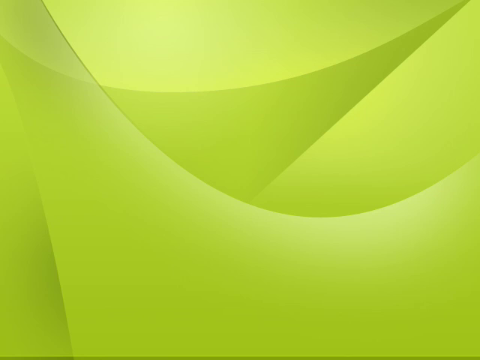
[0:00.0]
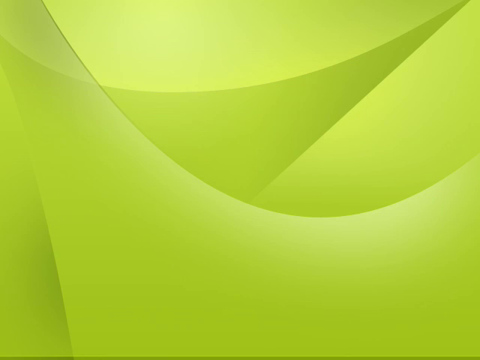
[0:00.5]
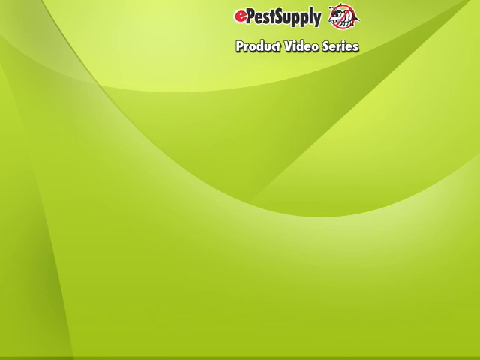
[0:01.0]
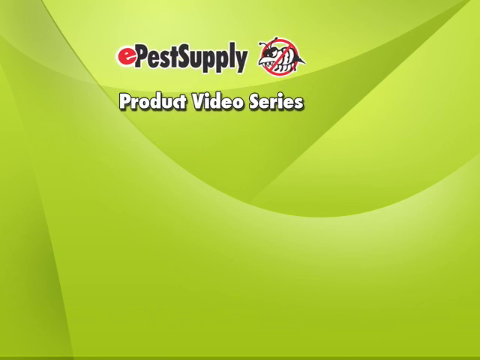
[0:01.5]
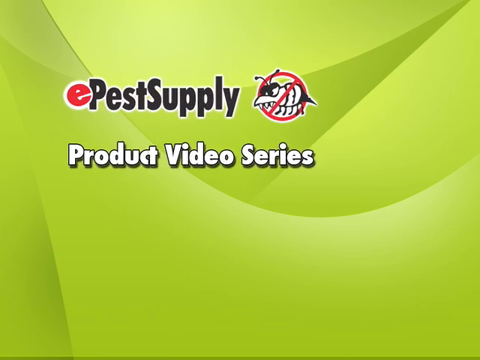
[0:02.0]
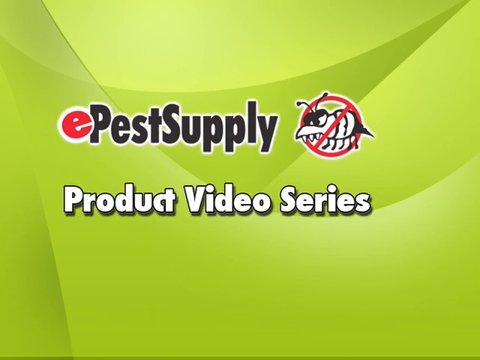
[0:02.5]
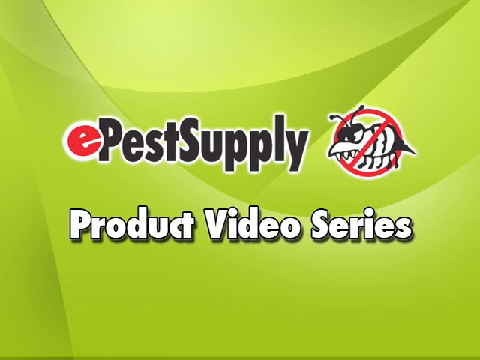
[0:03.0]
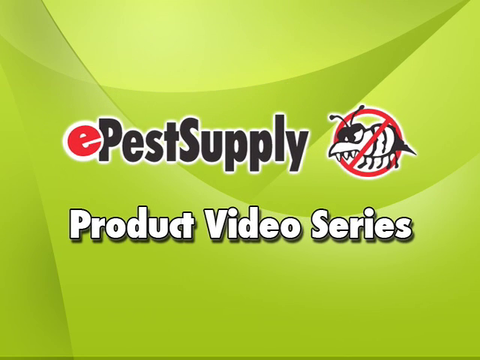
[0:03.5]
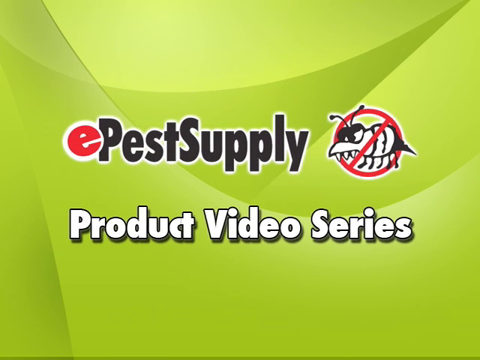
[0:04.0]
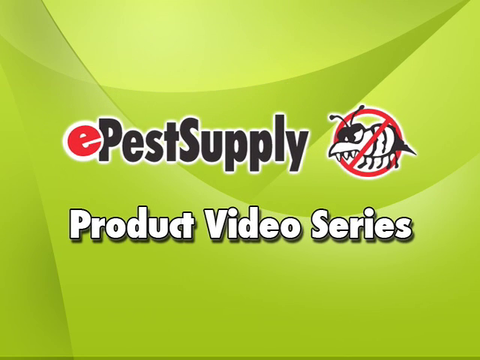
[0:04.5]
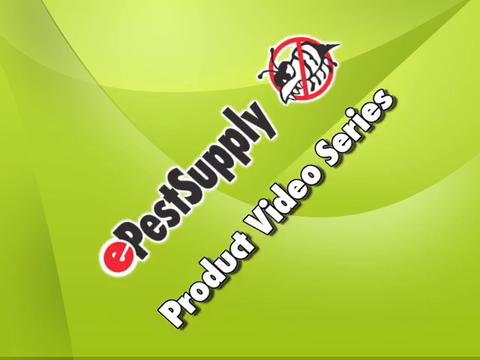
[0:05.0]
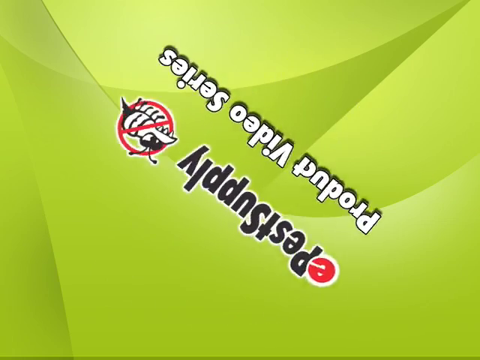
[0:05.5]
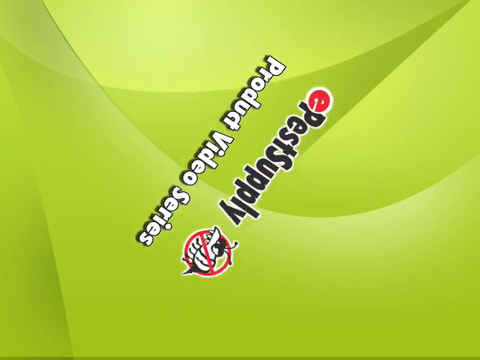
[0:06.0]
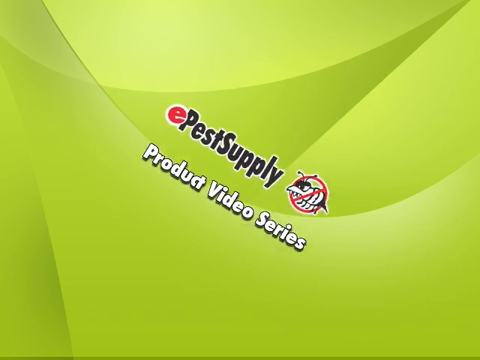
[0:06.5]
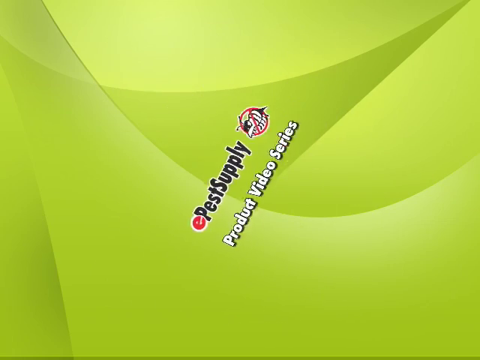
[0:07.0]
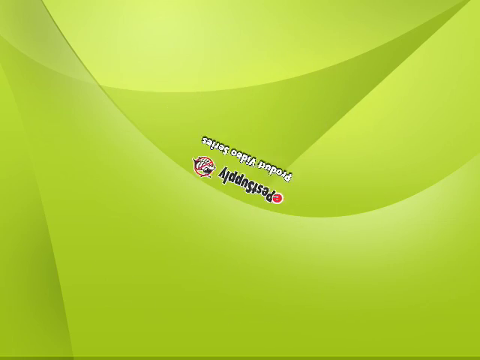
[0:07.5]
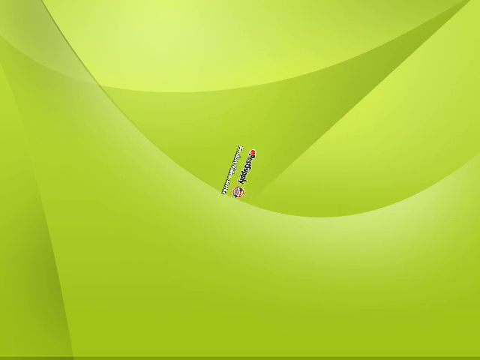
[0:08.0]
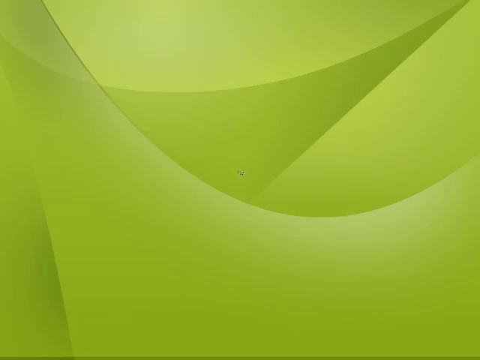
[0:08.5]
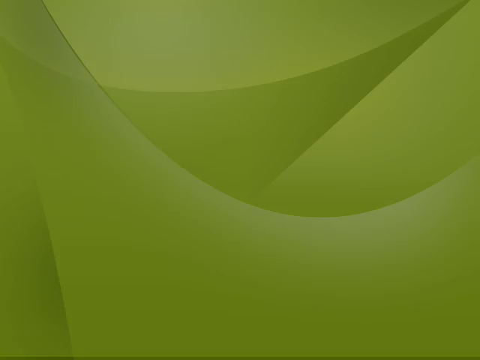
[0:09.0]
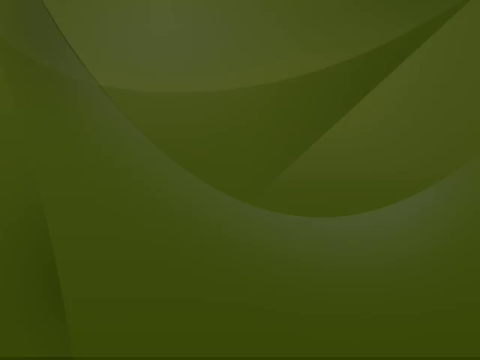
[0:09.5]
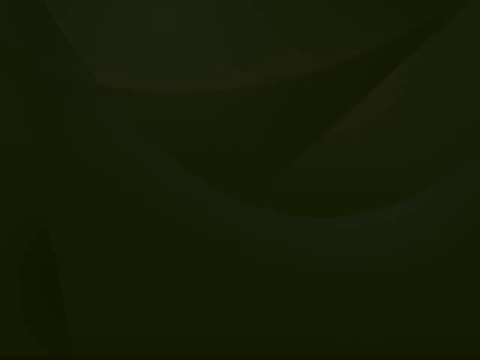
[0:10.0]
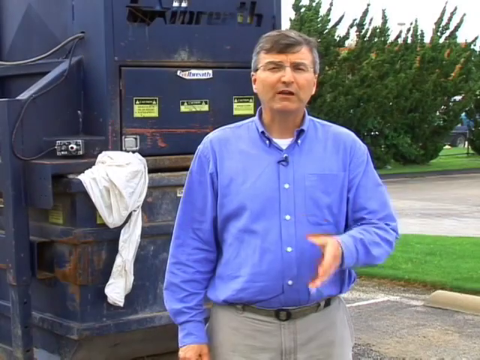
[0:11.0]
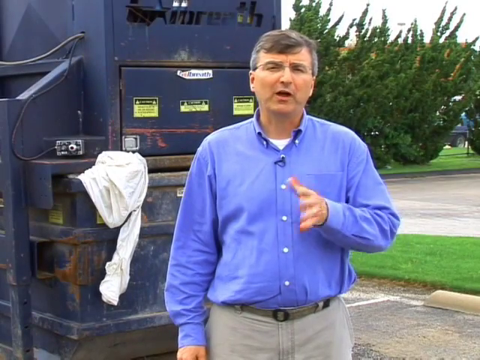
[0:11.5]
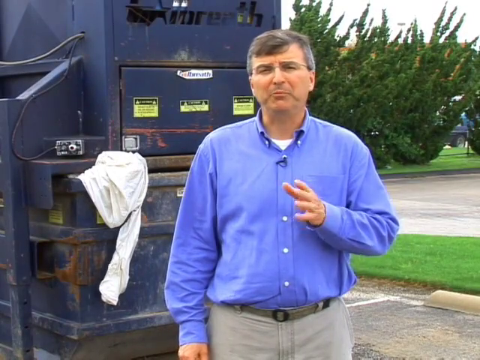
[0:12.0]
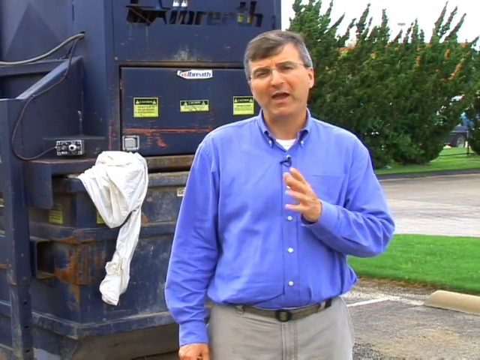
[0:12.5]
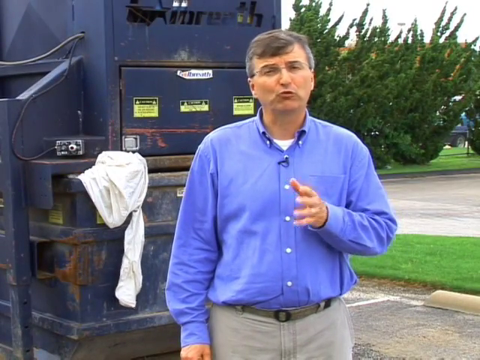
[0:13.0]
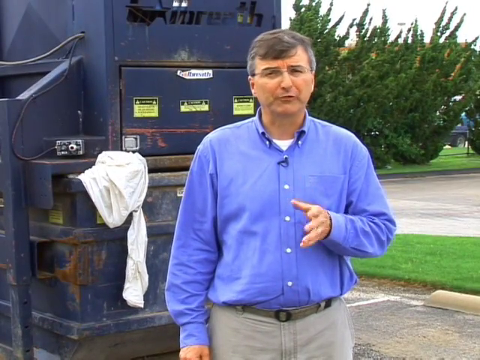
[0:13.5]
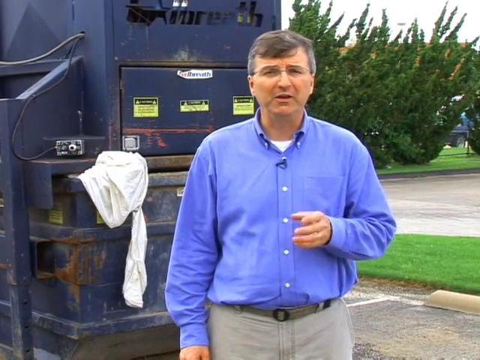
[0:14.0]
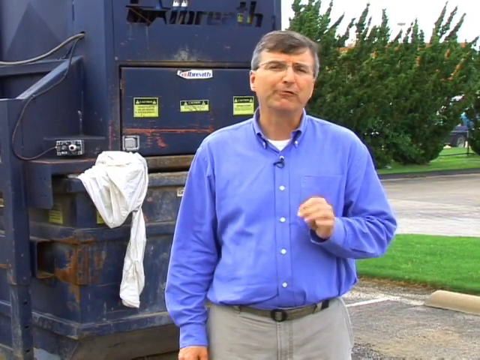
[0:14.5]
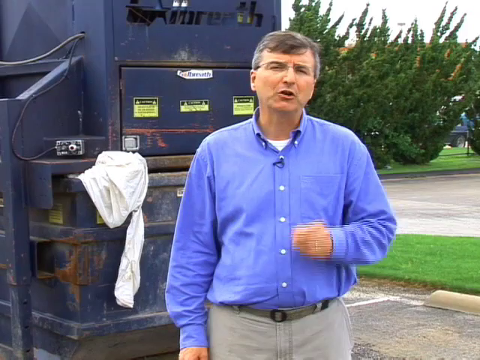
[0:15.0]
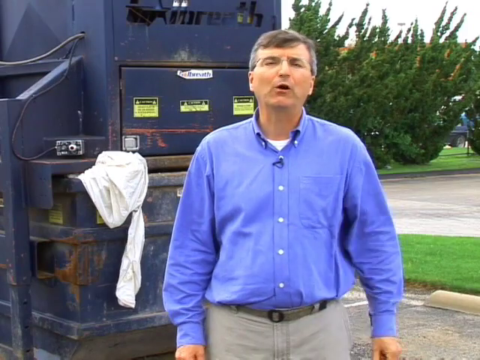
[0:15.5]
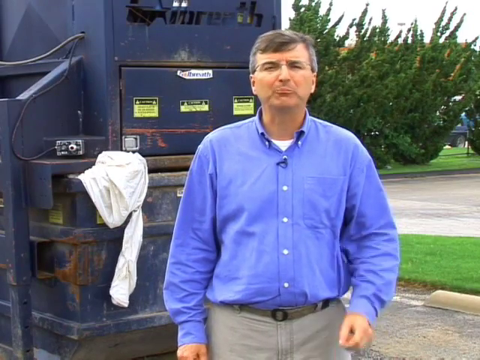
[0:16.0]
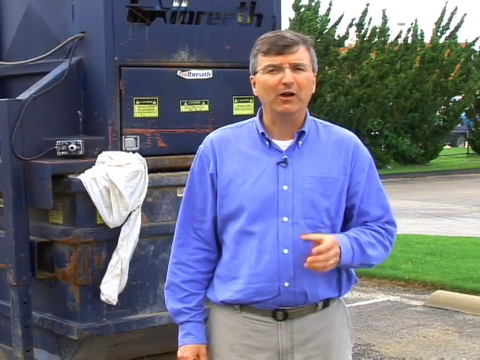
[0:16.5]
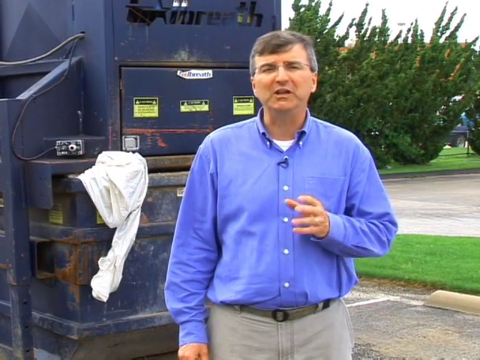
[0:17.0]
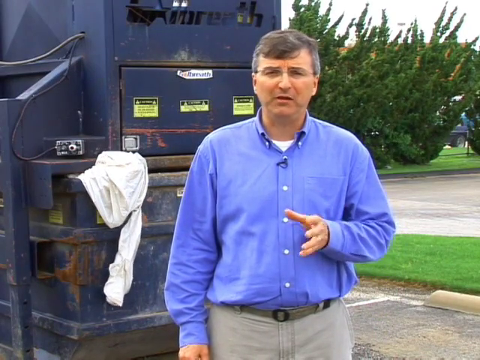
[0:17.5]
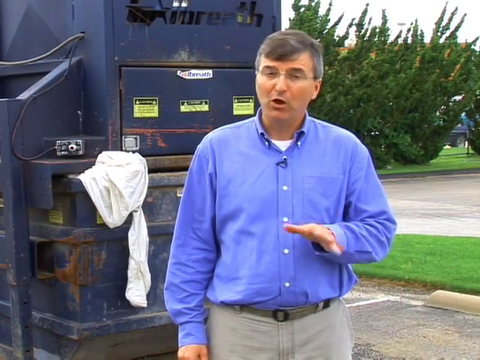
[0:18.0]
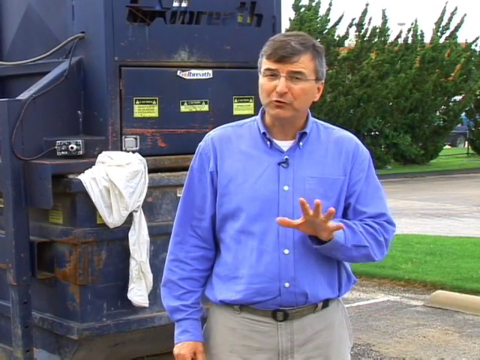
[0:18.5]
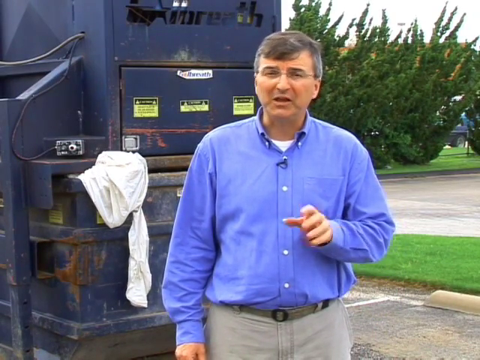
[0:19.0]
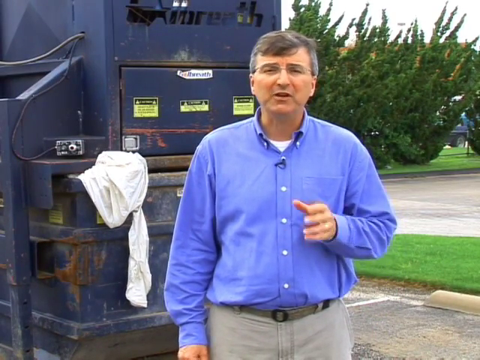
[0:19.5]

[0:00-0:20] A title card appears that reads "ePestSupply Product Video Series," with a small icon of a bug with a red line through it. The text appears to spiral toward the back of the screen, and then the page fades out completely. The video cuts to a man standing in front of what looks like a blue dumpster, which is behind him to the left. Something that looks like a garbage bag or a piece of fabric is hanging out of the dumpster. The man wears a long-sleeved blue shirt, glasses, and khaki pants with a belt. He speaks directly to the camera, gesturing with his left hand while his right hand stays close to his side. Behind him on the right are some trees and what looks like a parking lot or a city street.